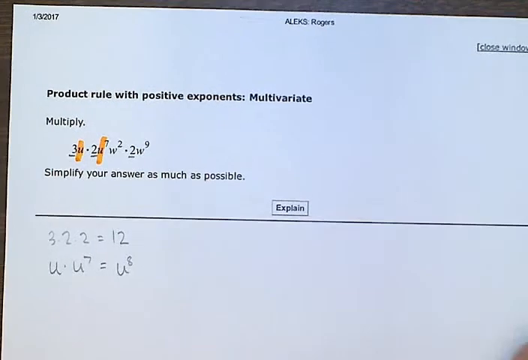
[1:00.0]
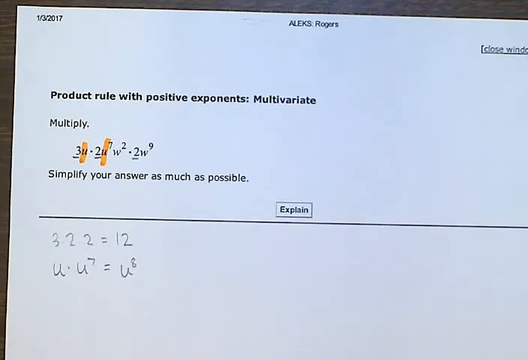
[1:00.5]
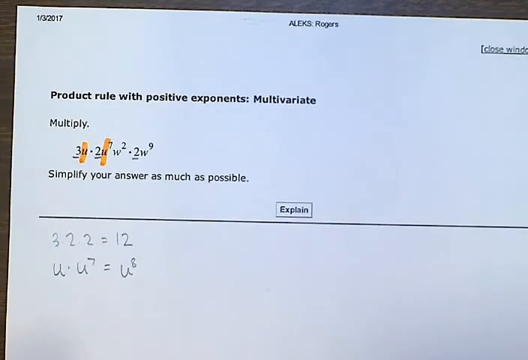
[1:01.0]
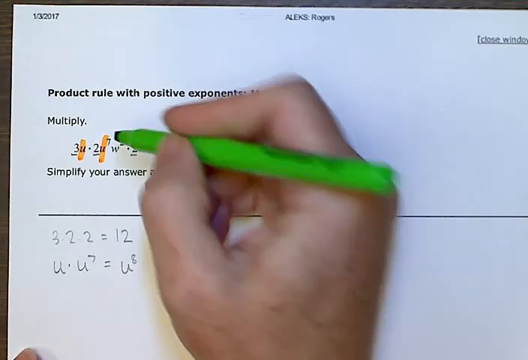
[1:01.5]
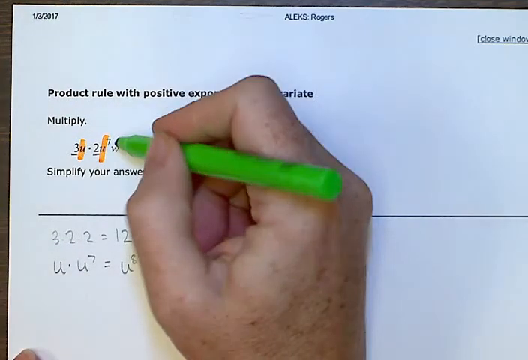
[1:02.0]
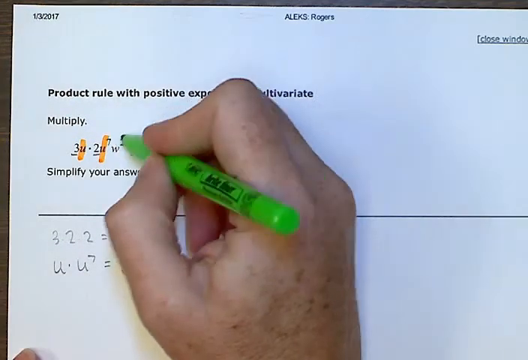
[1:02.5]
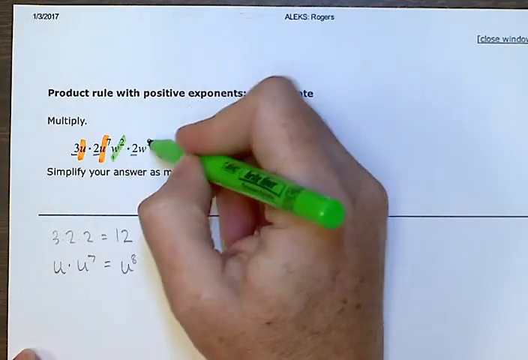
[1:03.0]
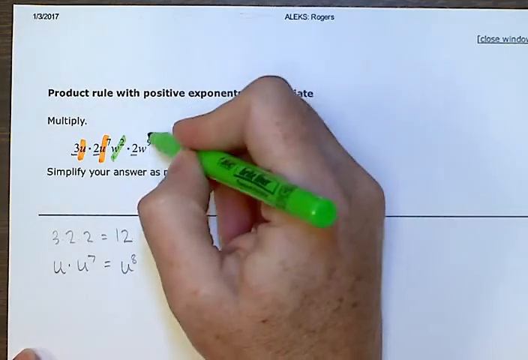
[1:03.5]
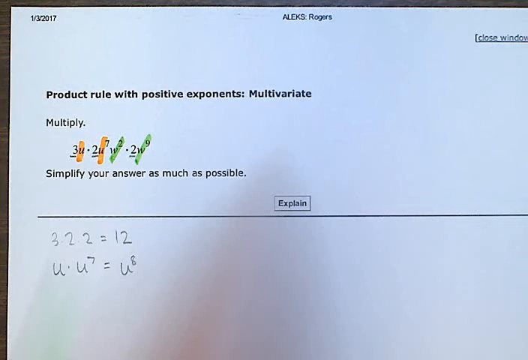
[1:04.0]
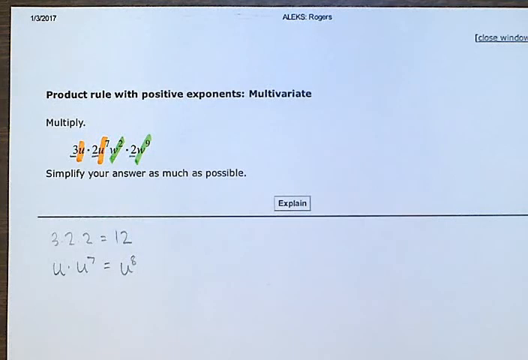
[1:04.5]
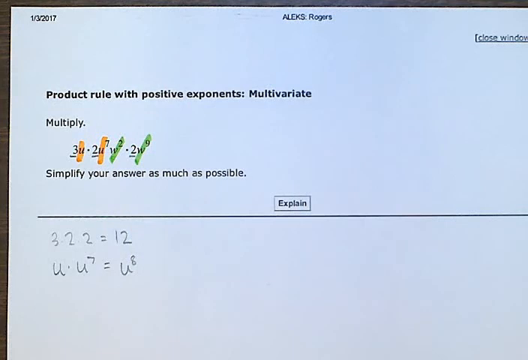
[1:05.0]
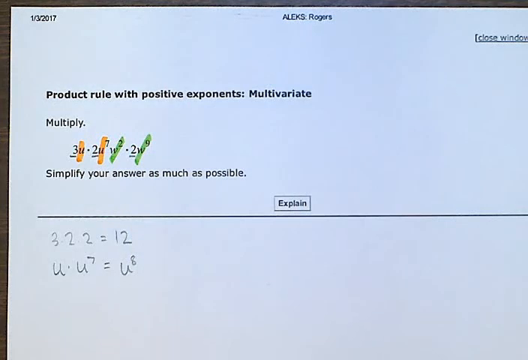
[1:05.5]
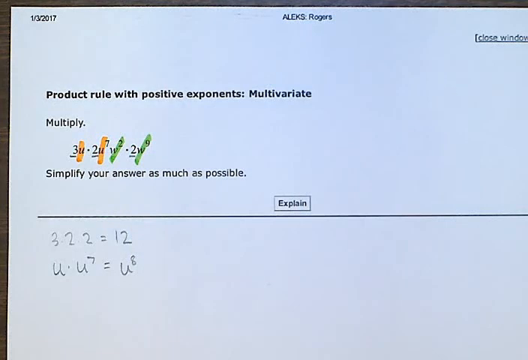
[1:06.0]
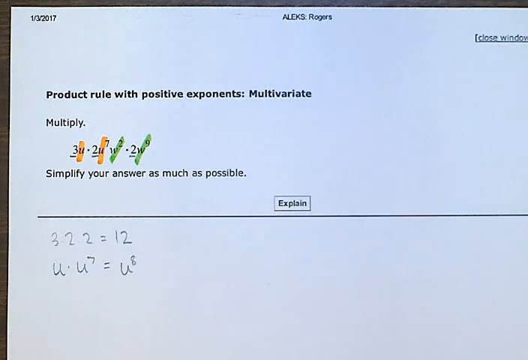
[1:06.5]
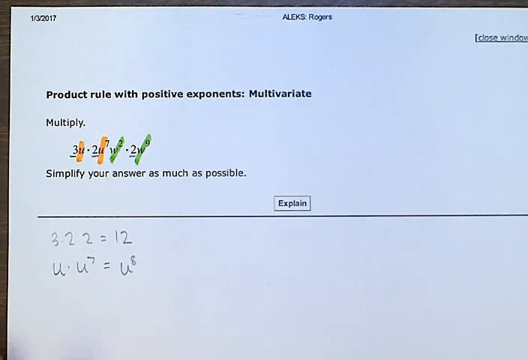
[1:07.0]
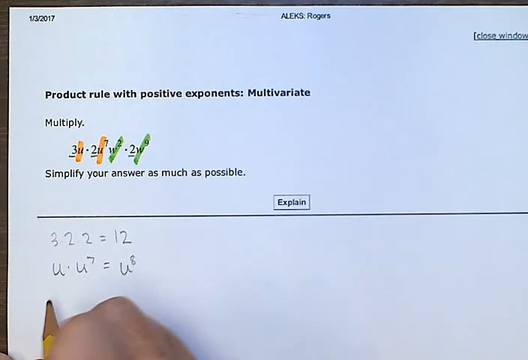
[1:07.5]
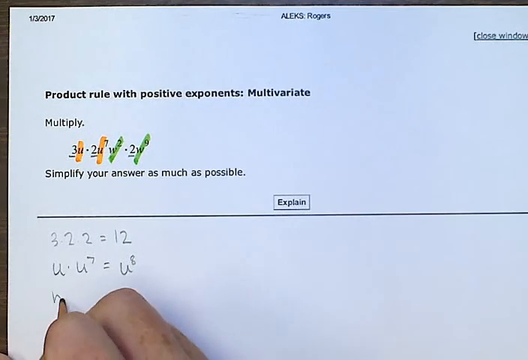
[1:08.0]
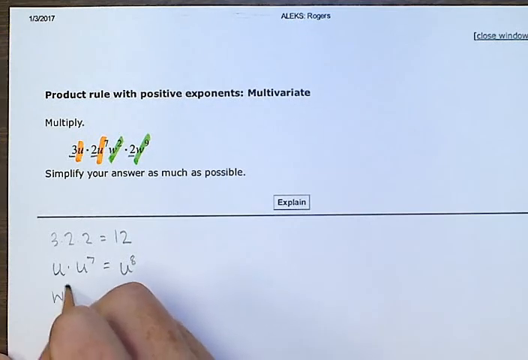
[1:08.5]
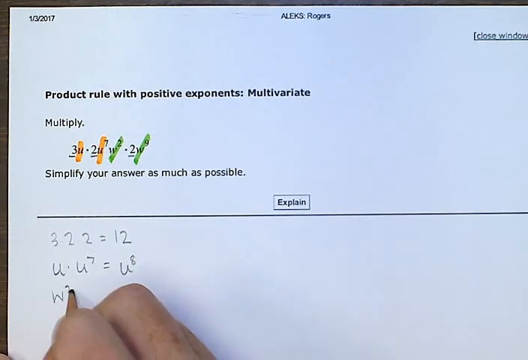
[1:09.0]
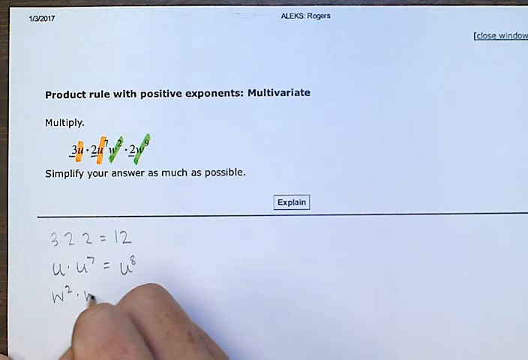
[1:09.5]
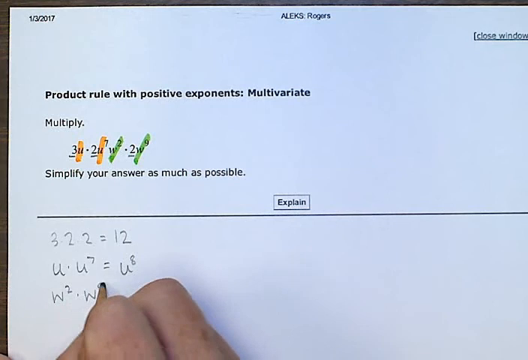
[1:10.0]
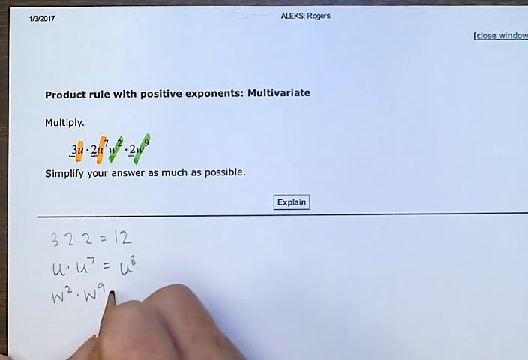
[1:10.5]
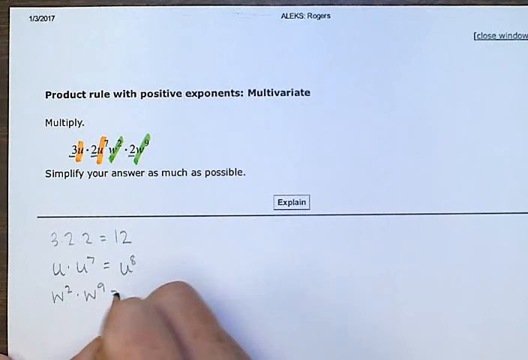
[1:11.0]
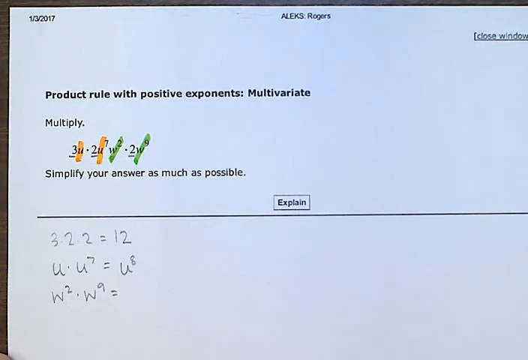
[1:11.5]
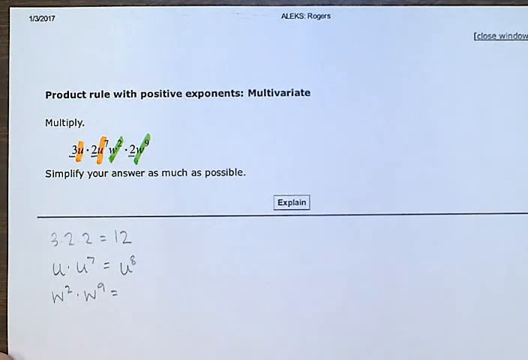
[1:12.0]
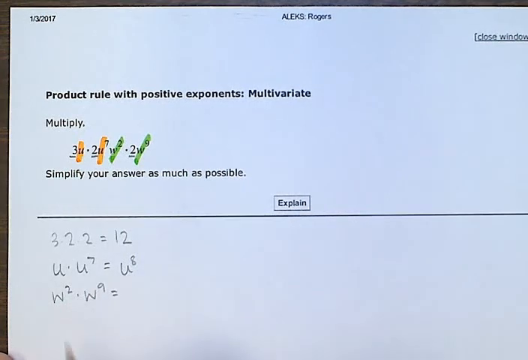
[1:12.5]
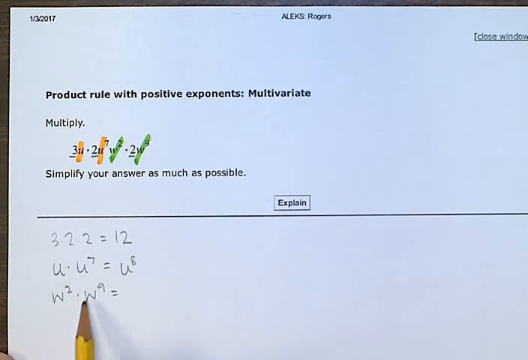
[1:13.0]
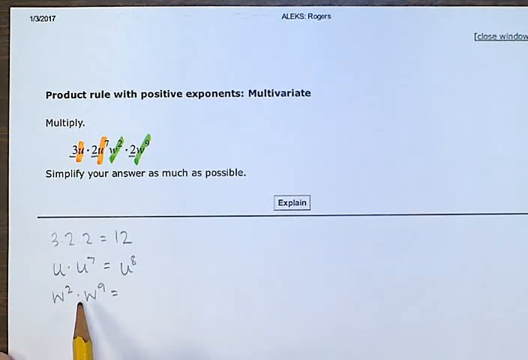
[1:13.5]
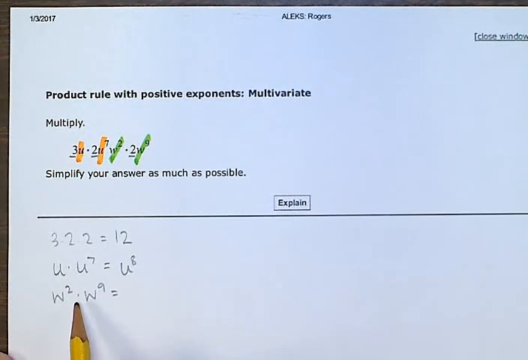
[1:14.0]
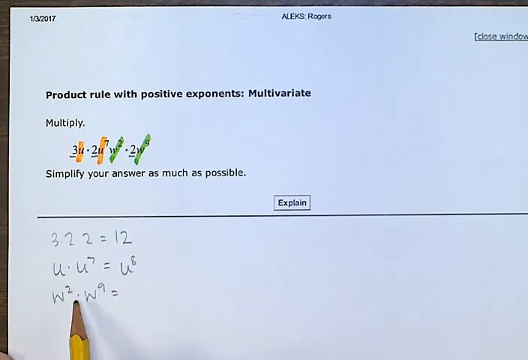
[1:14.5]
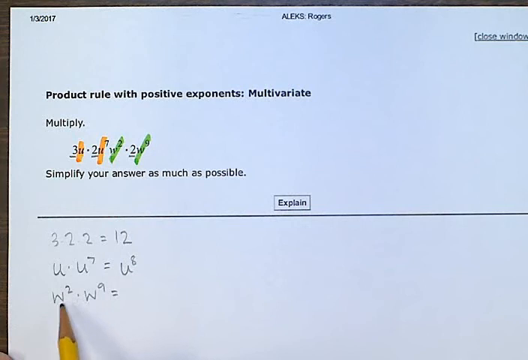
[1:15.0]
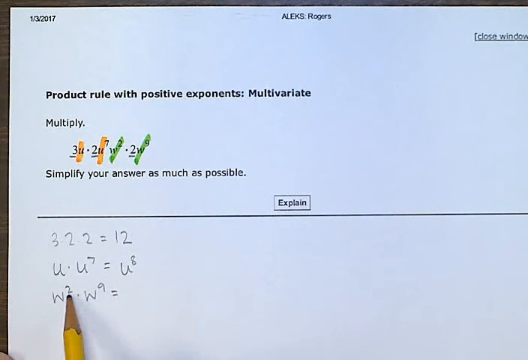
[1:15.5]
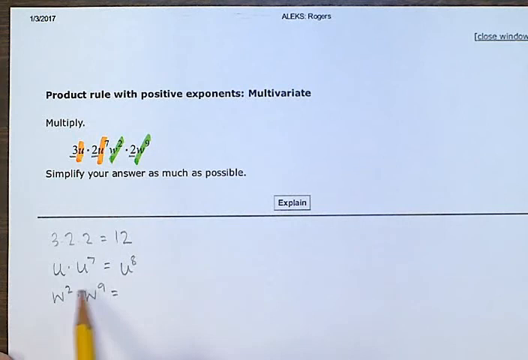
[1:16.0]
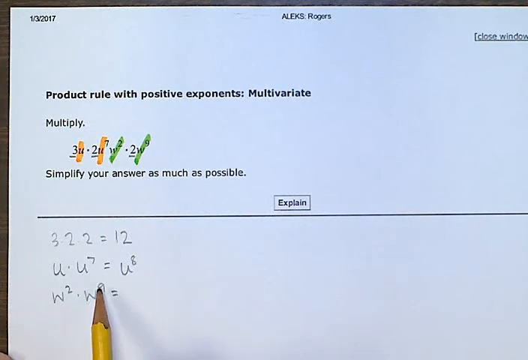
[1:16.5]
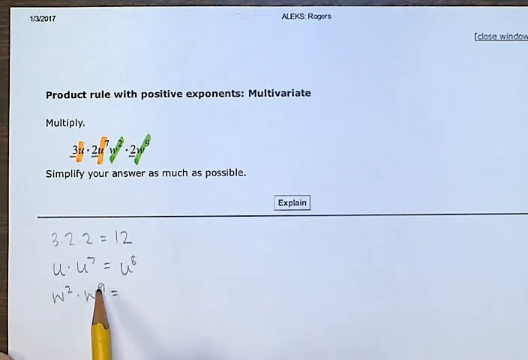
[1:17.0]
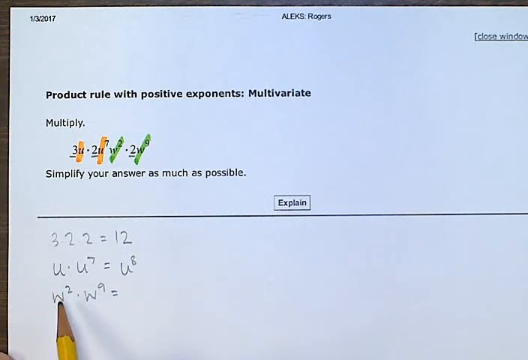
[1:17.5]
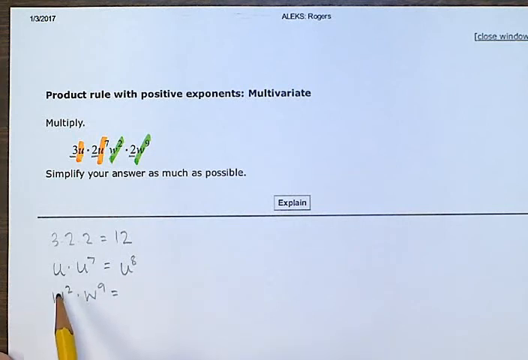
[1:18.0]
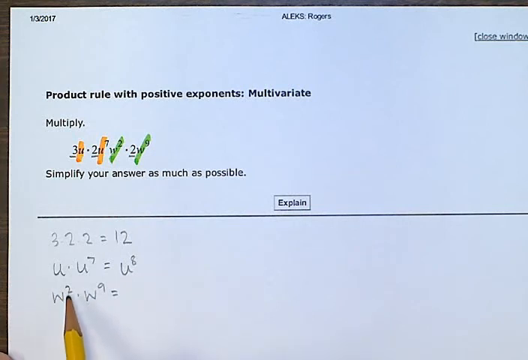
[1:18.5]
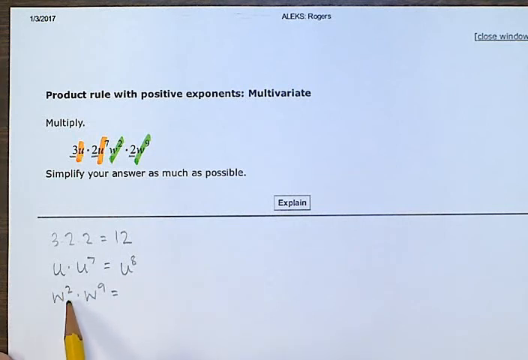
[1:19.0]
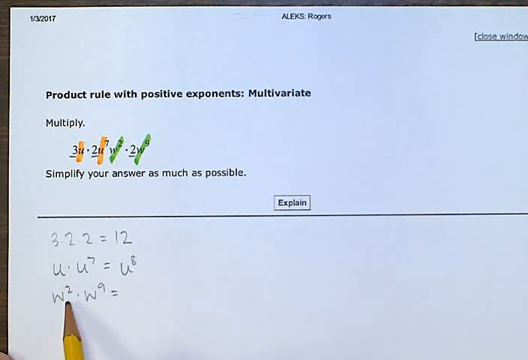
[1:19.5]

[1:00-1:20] The paper is jolted, rocking from left to right. The hand reappears from the very bottom middle of the screen, now holding a green highlighter pen with the thumb and first finger. They move the hand up to the top sum underneath the word "multiply" and draw across W2 and W9, then move the hand down and off the screen. The hand comes back with two fingers holding a pencil and writes W2 dot W9 equals underneath the bottom sum in the bottom left-hand corner. The pencil then reappears, is placed underneath W2, and hovers around this sum without making any more markings.